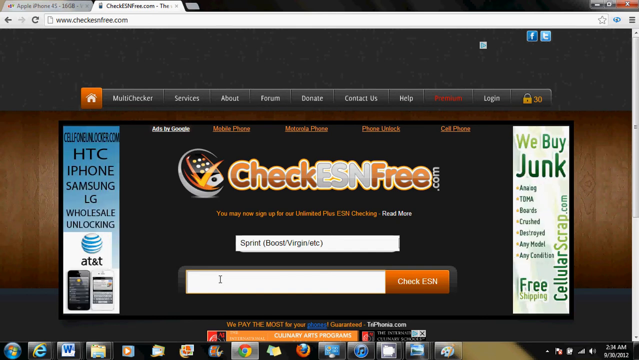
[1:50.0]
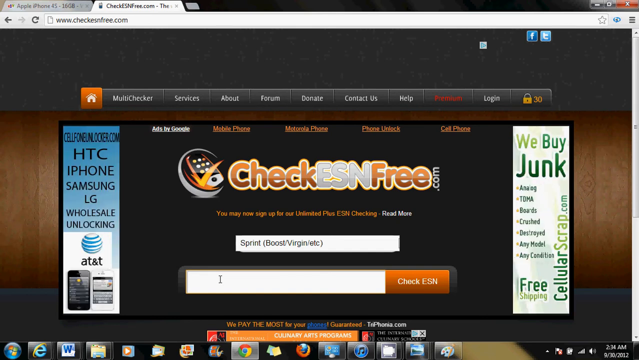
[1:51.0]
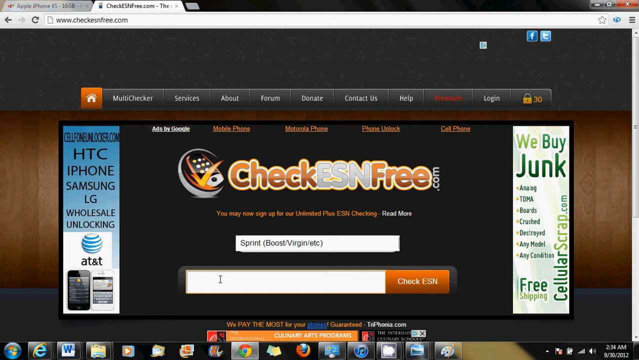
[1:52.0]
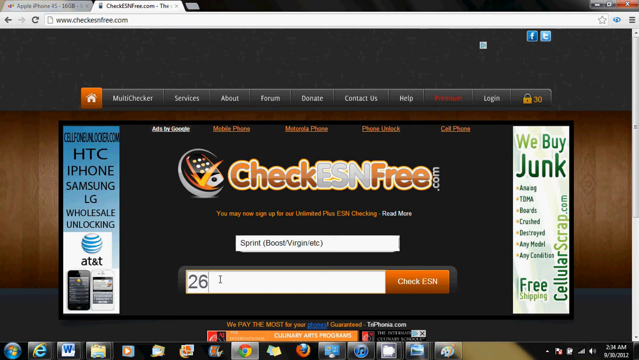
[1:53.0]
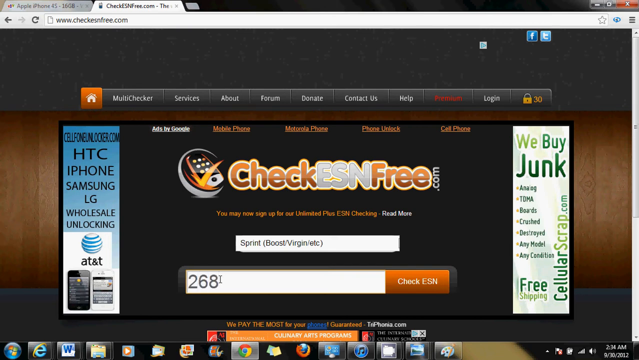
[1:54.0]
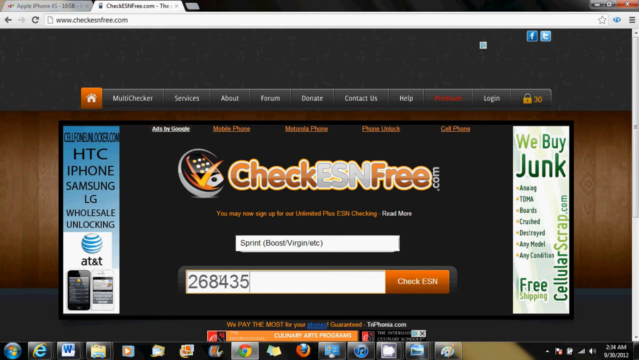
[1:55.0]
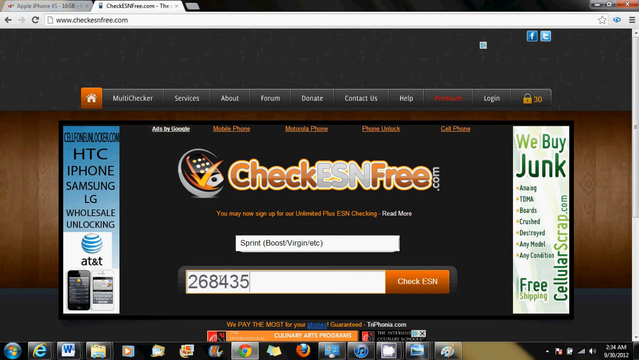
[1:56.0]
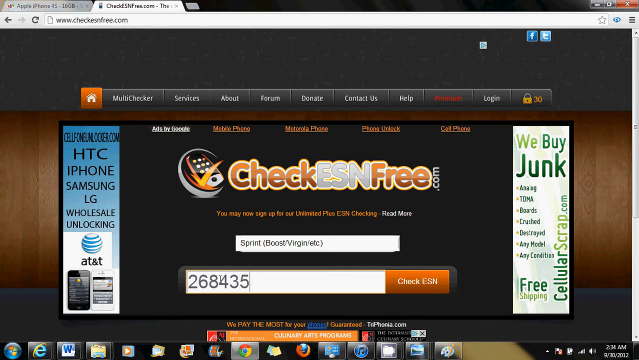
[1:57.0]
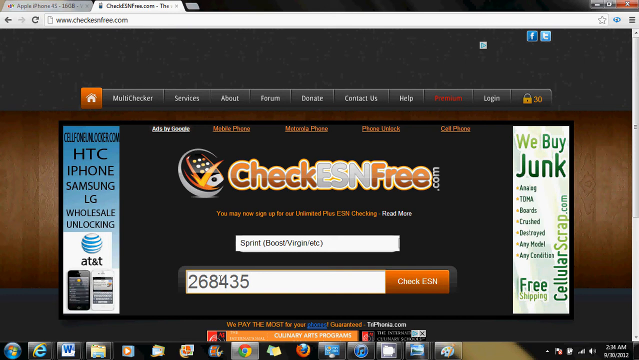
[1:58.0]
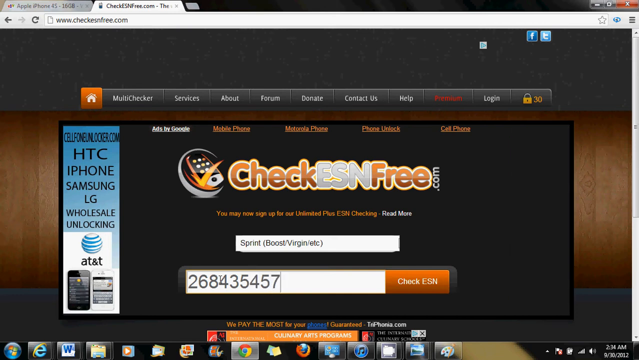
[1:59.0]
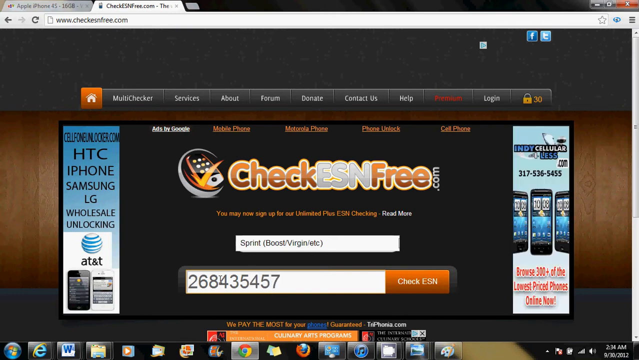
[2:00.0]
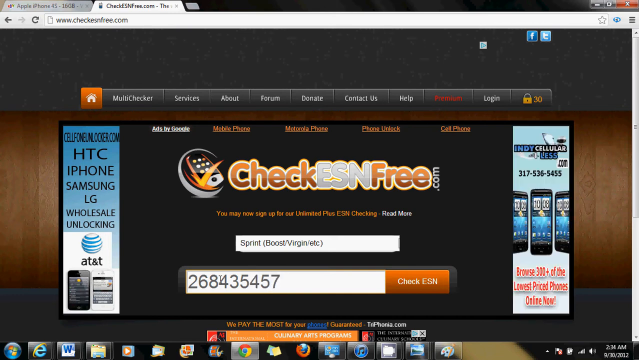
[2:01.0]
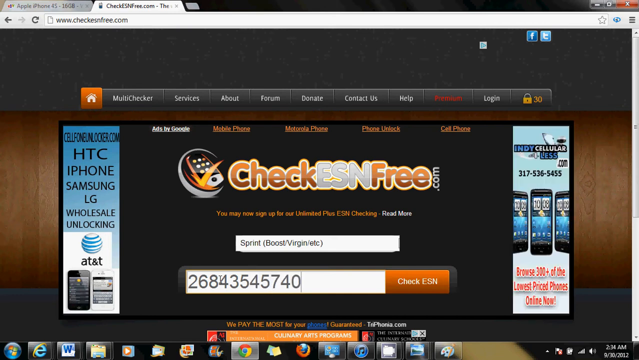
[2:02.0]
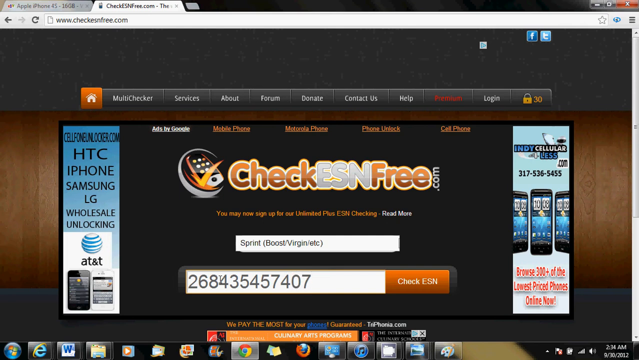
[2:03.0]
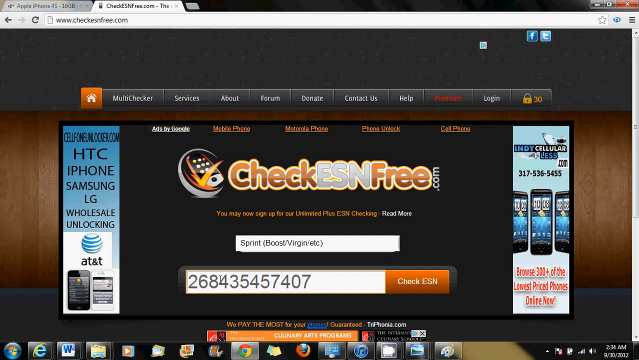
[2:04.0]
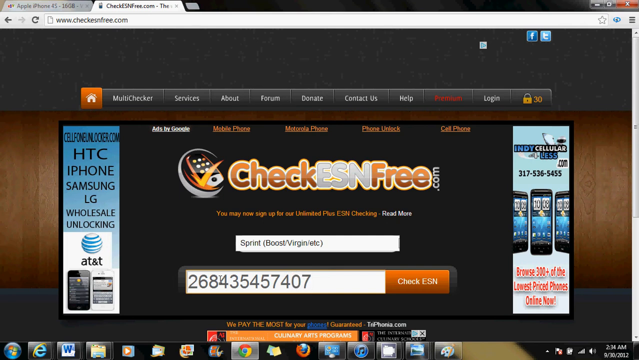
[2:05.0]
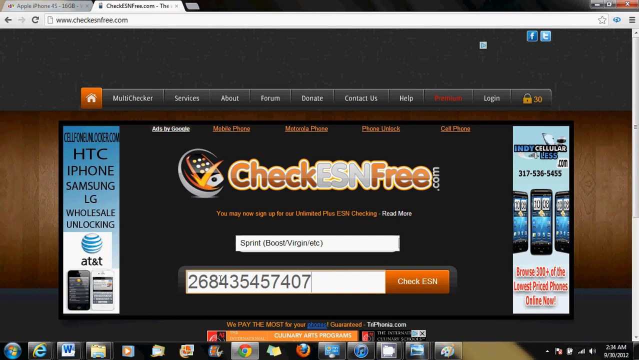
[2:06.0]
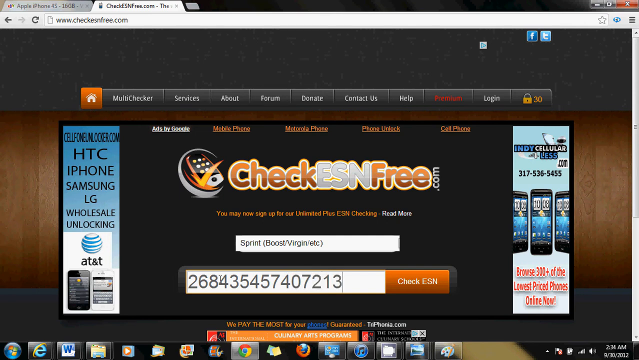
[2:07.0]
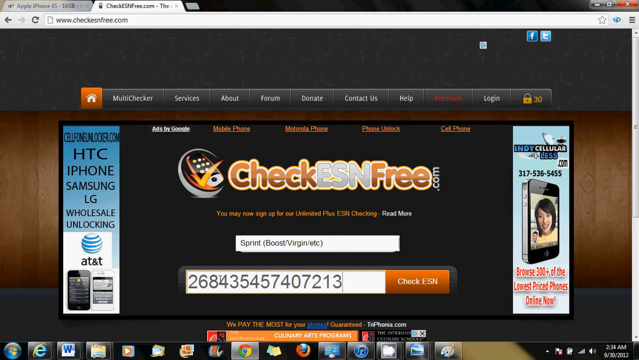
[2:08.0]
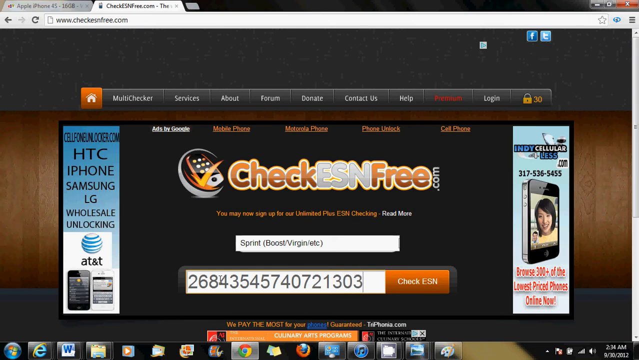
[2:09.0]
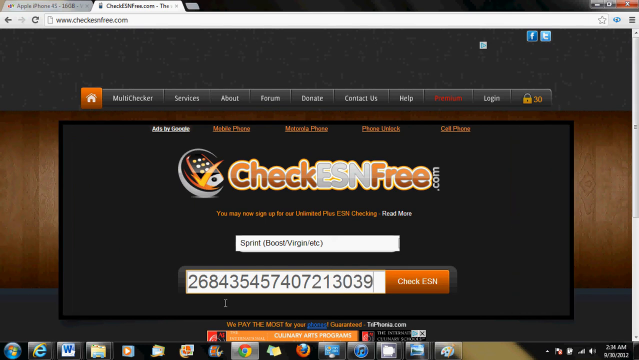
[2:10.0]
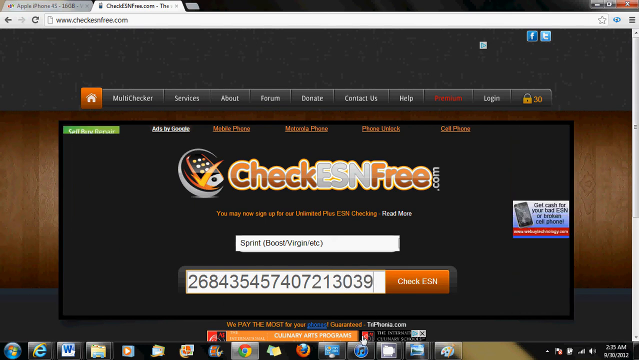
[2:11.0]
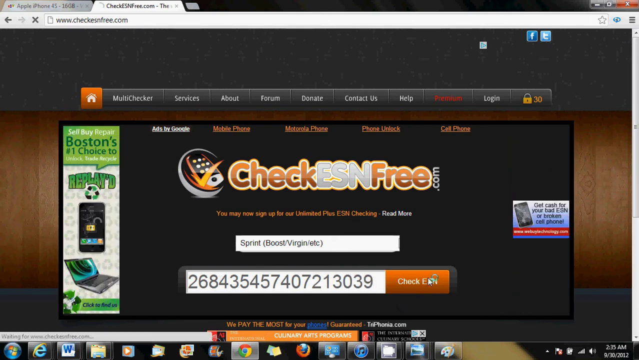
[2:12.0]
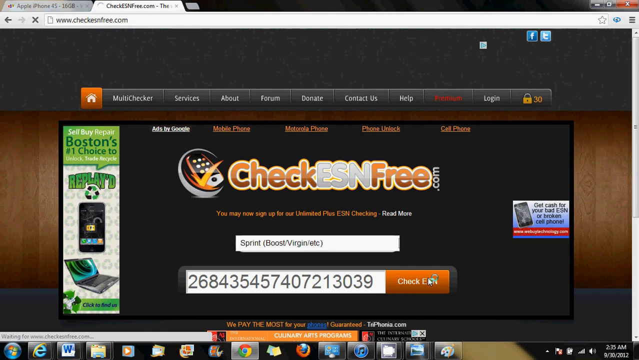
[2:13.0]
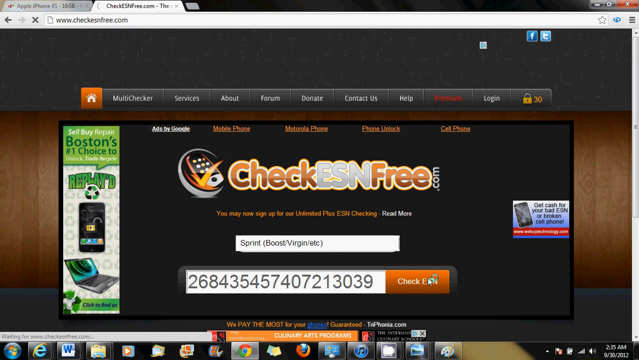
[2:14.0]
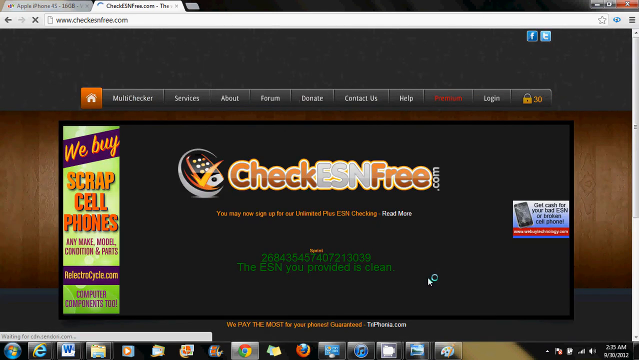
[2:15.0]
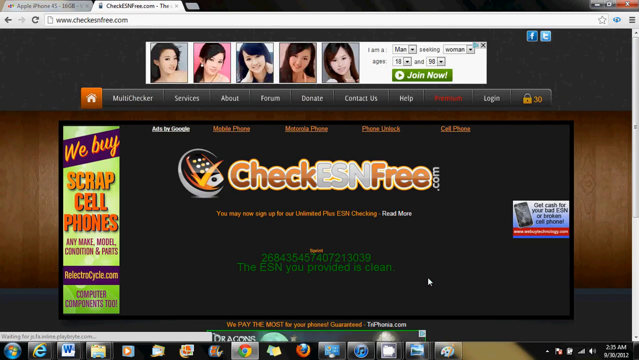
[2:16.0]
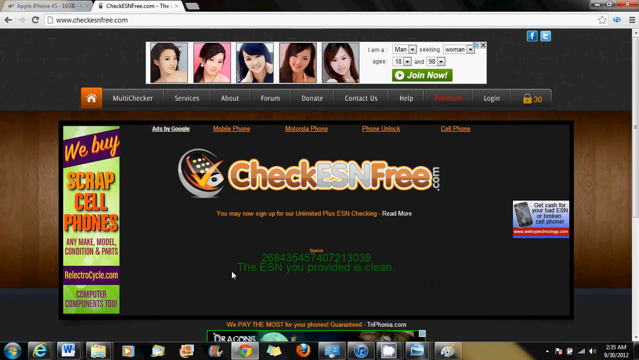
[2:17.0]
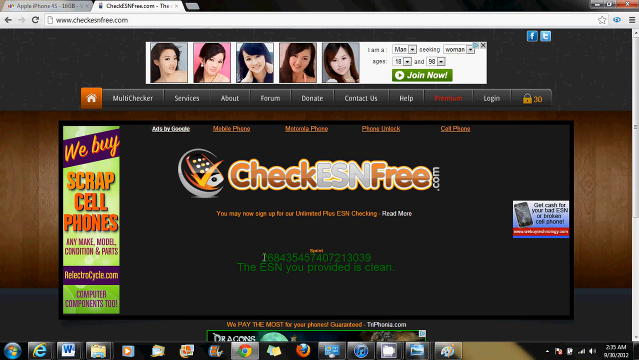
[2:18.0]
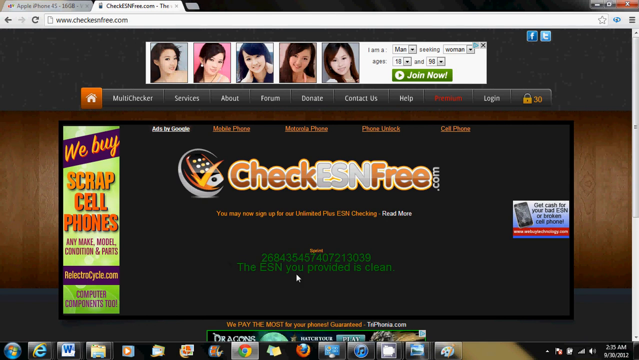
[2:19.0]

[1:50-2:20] The person types in a series of numbers, 2 6 8 4 3 5 4 5 7 4 0 7 and 2 1 3 0 3 9, and clicks "check ESN." Once it loads, green text shows the number just entered and reads "The ESN you provided is clean." The background is still black and the Check ESN Free logo is still there. Above the navigation bar is now another advertisement, a dating ad with several drop-down menus reading "I am a man seeking woman ages 18 and 98," letting one choose a gender, a desired gender, and an age range. The top navigation bar is black, and the ad's background is also black.